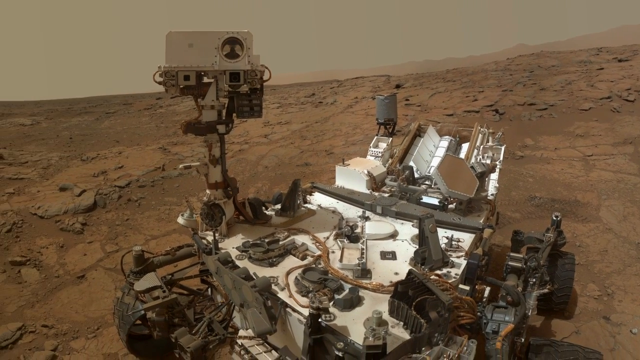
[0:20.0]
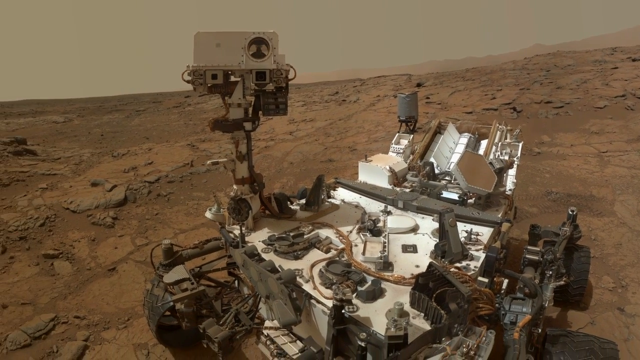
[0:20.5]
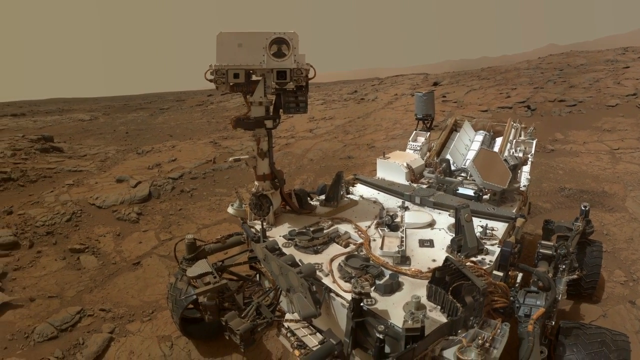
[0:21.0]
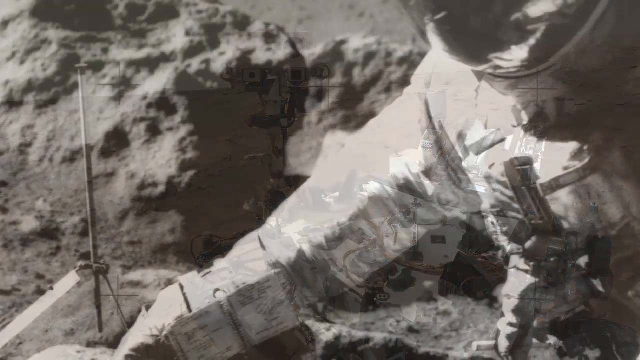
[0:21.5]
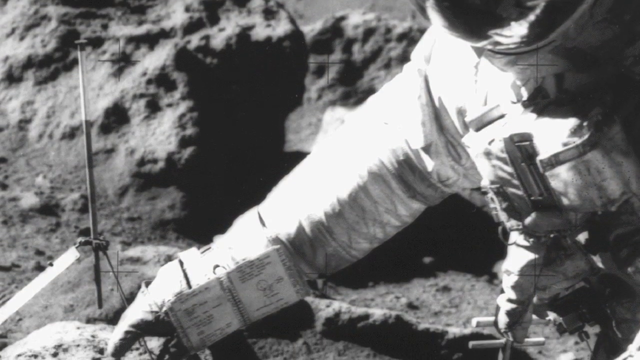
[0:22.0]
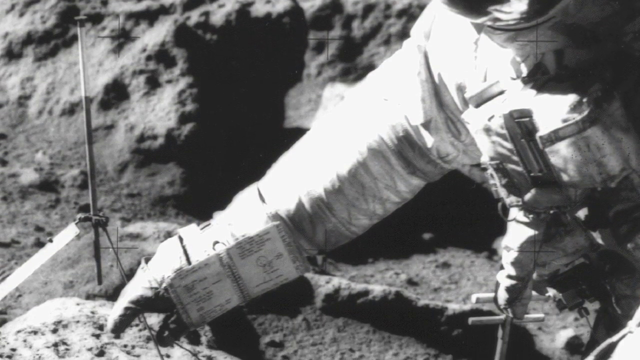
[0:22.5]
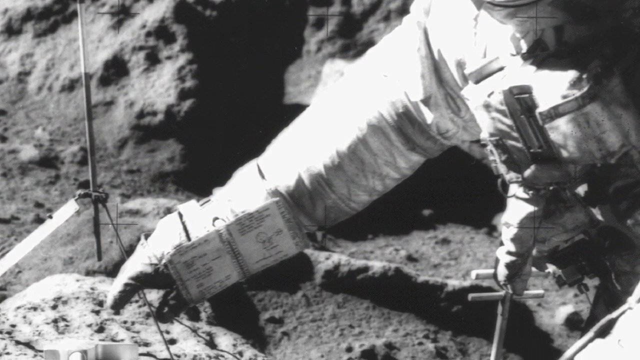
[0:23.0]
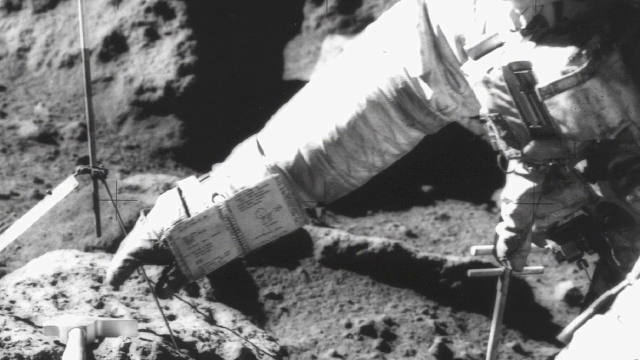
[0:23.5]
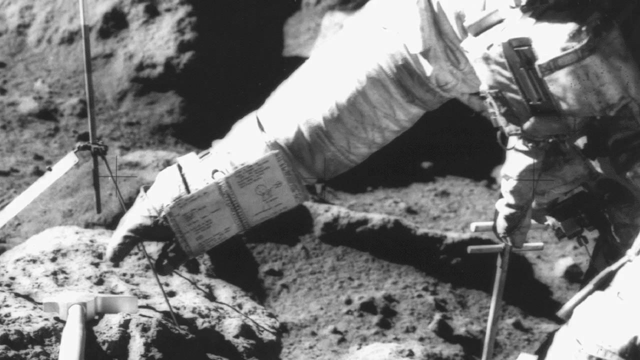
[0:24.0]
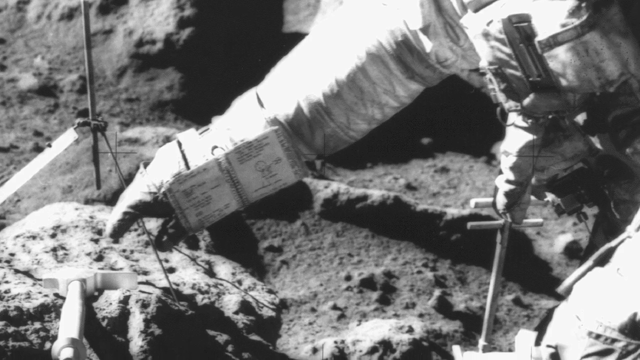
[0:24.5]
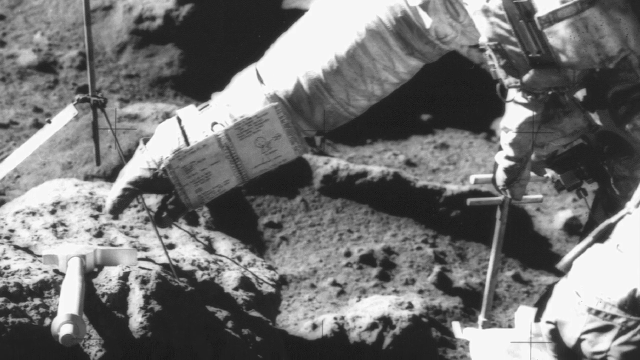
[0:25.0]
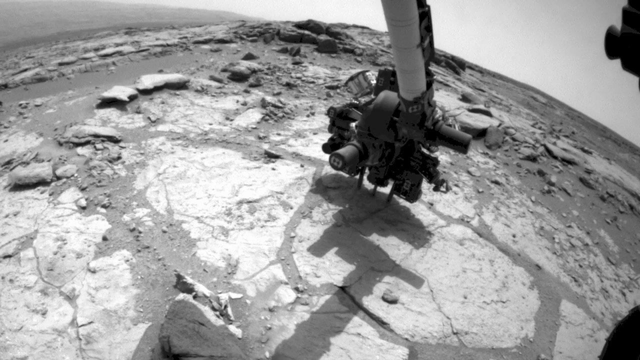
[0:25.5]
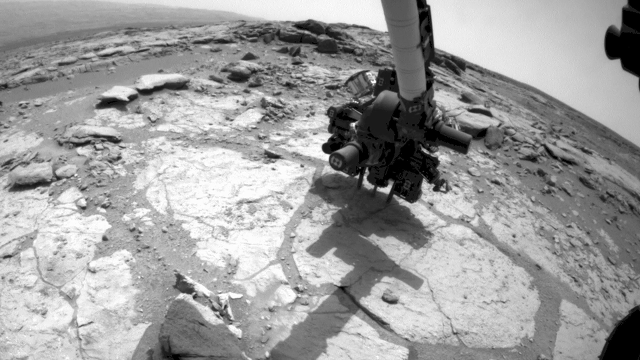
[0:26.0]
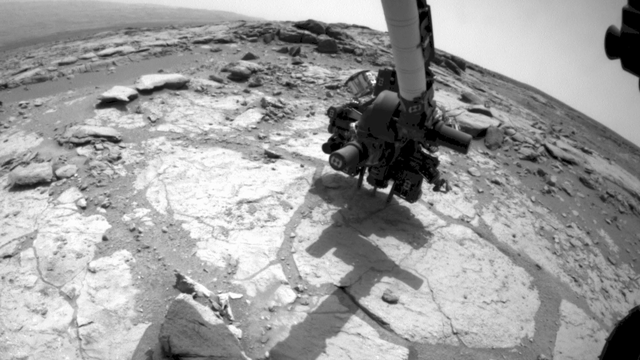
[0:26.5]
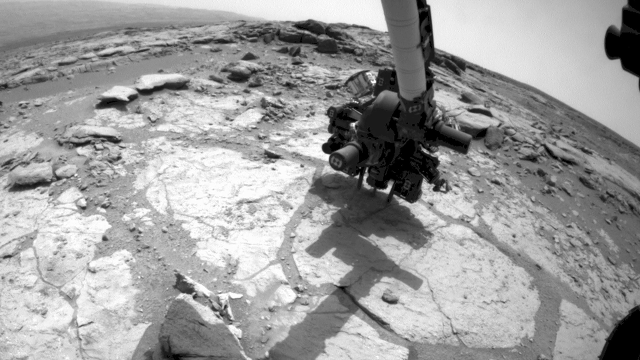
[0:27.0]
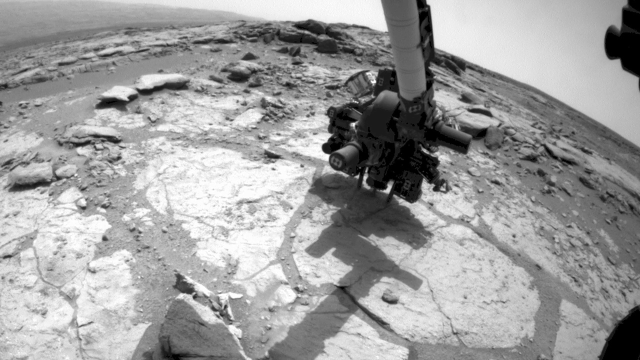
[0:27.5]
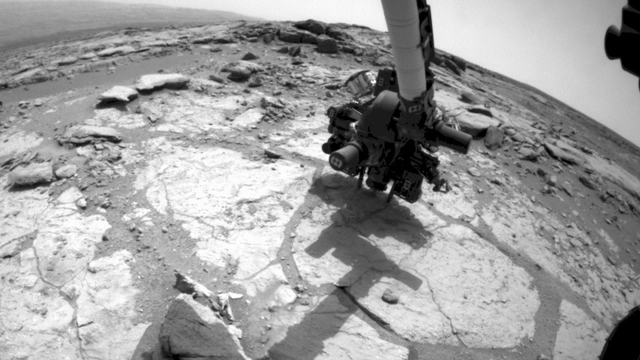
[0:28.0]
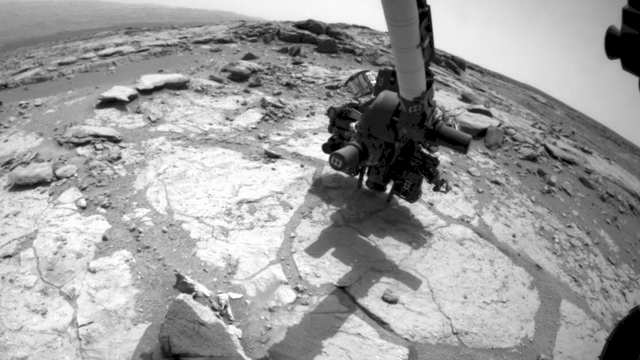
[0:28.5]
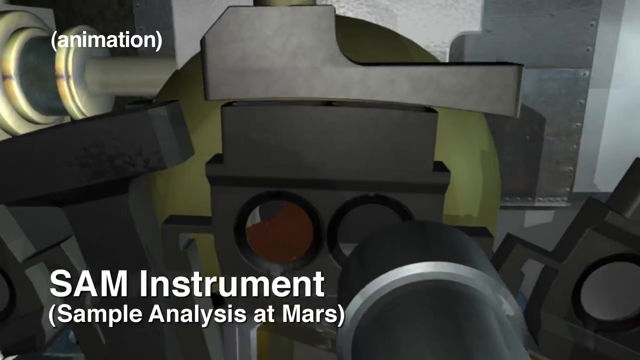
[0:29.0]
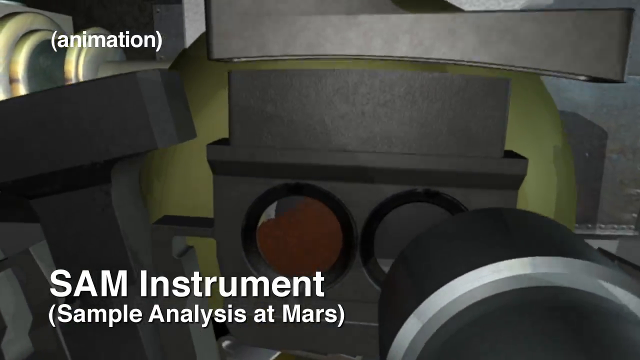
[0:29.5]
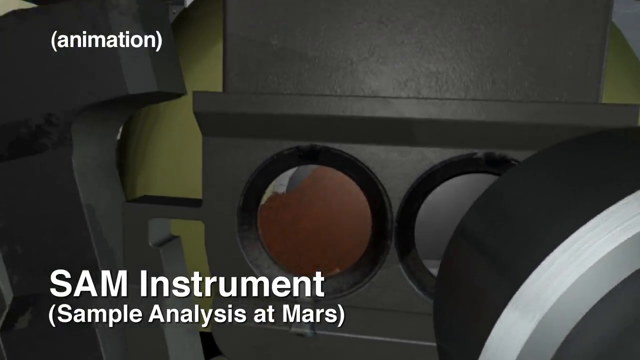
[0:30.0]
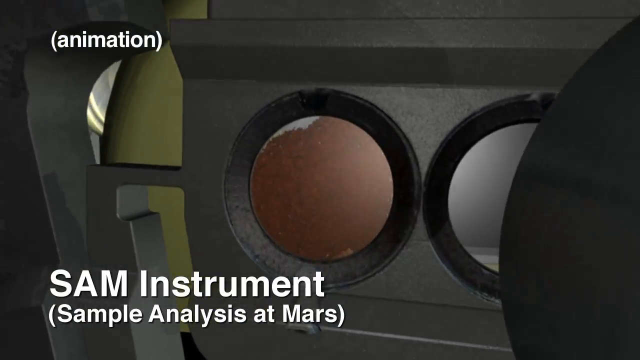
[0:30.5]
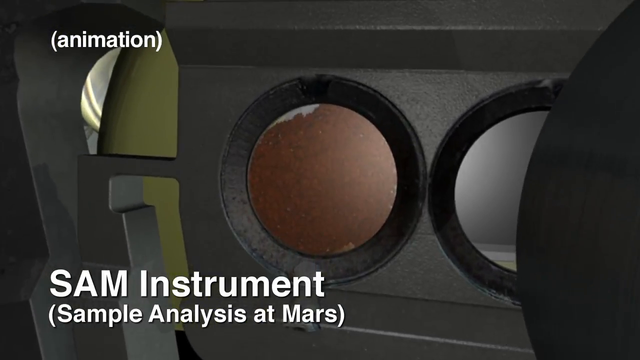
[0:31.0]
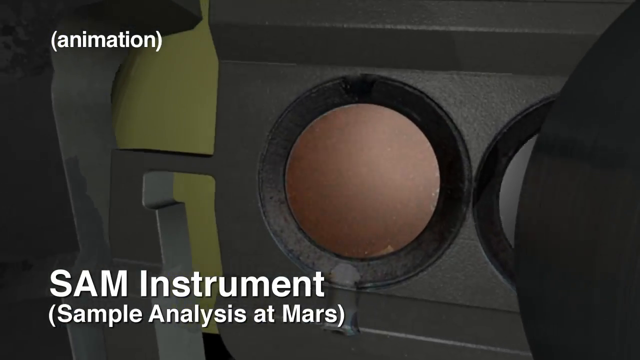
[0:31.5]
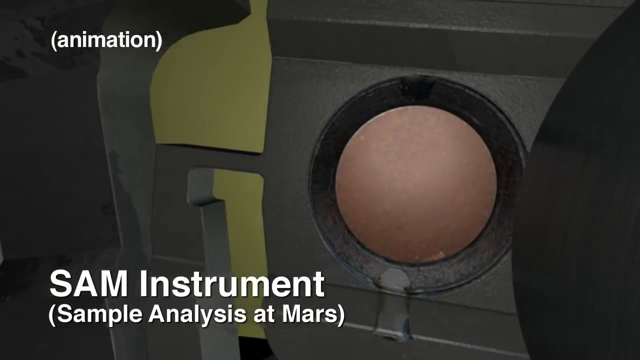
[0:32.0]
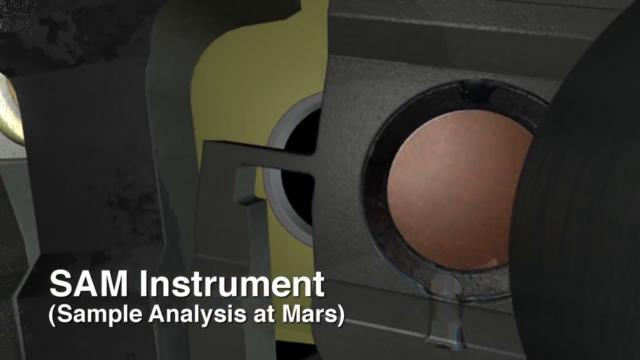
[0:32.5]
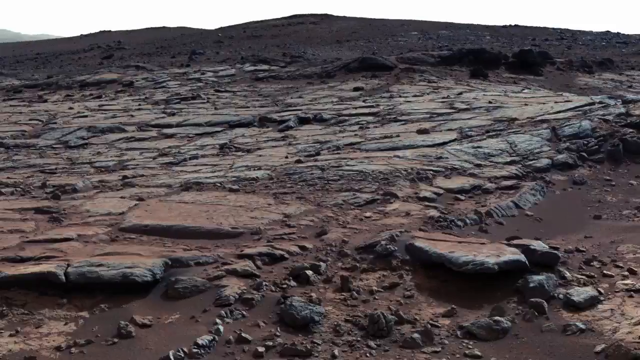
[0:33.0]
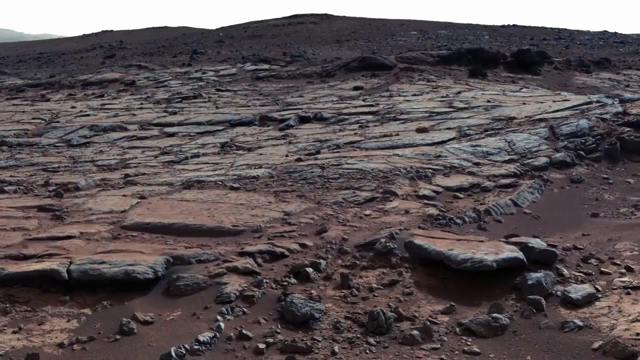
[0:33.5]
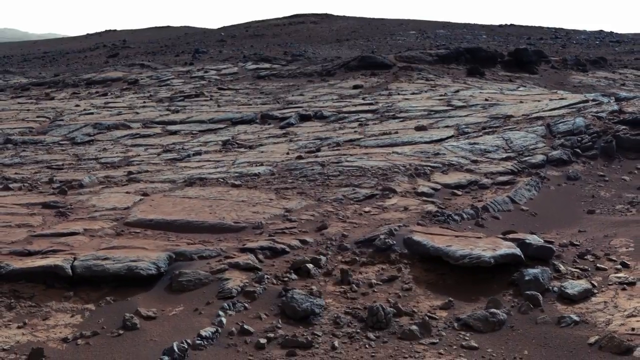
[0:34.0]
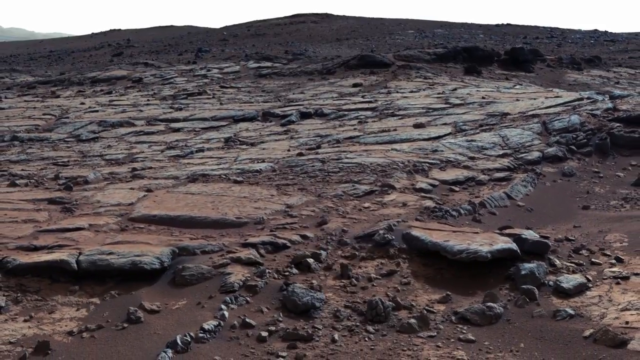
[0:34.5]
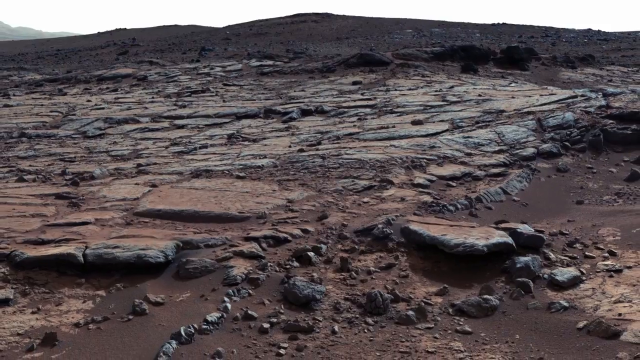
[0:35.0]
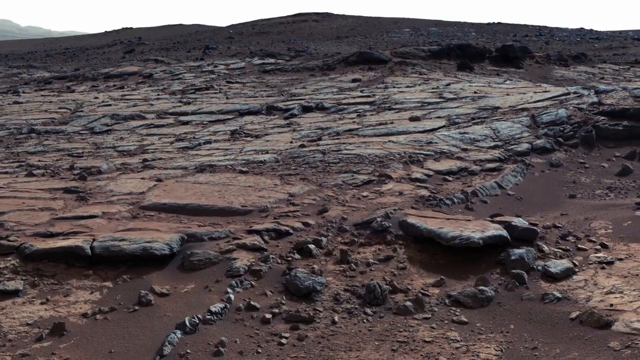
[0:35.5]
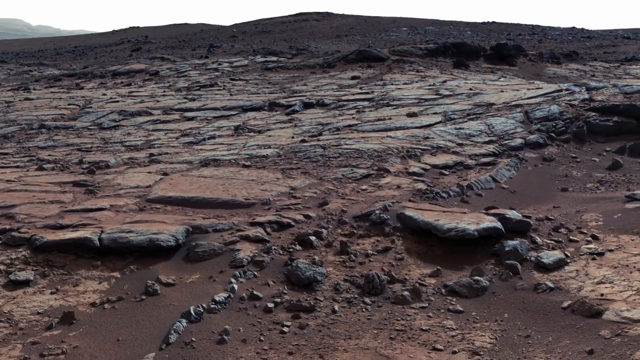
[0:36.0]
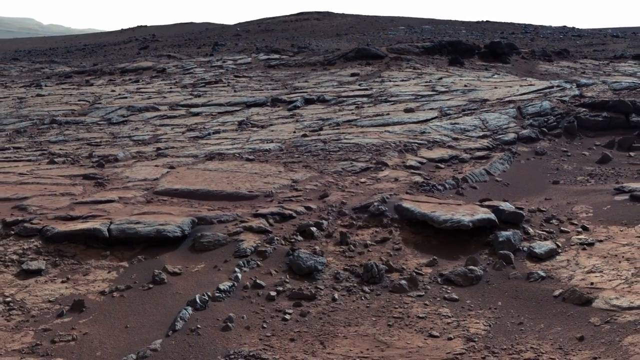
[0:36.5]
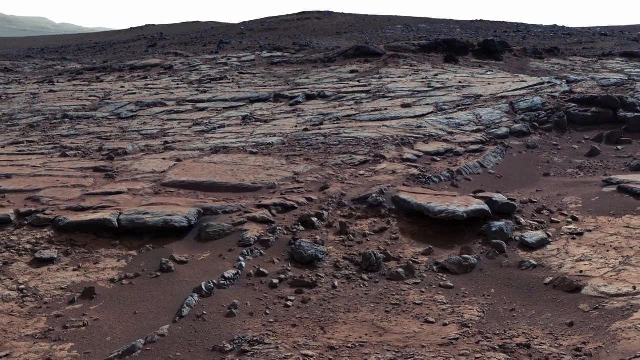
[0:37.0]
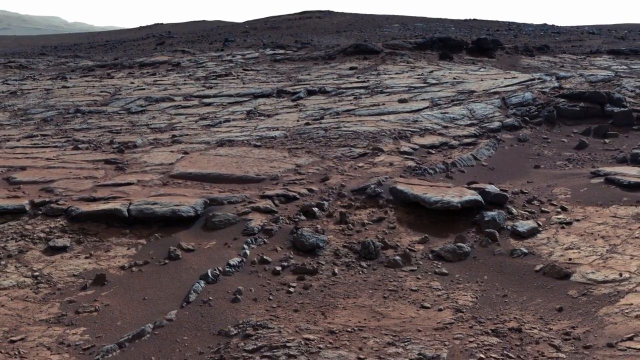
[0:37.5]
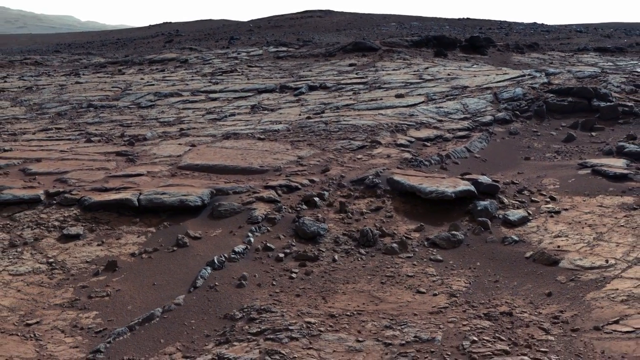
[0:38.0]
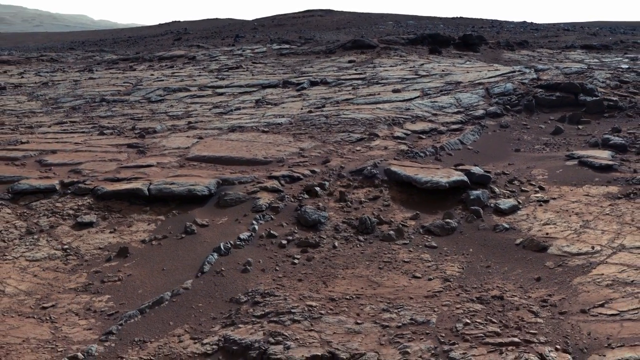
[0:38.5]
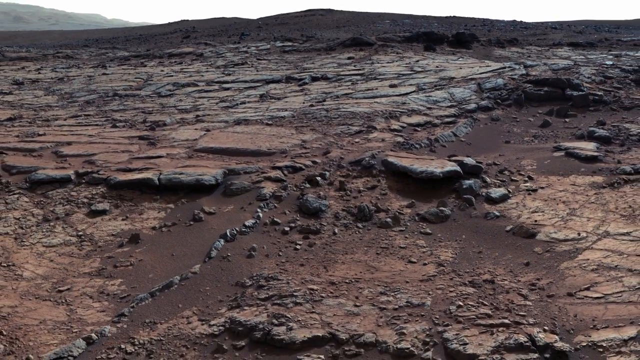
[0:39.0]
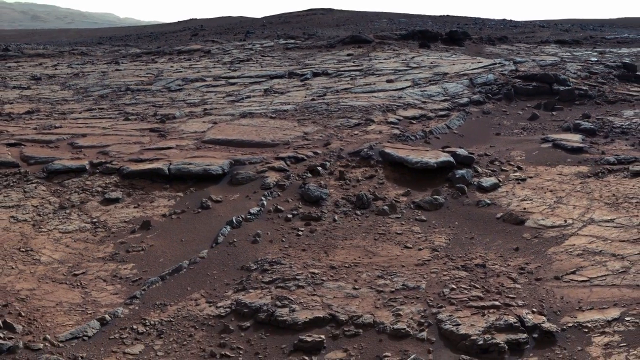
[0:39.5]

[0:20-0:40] An expansive view of Mars using the sample analysis instrument at Mars appears. It seems to give a wide view of the planet and of the equipment being used to explore it, and there seem to be many pictures showing a good portion of Mars and this machinery. One looks like a person on Mars trying to grasp or get something, apparently a person in a kind of space suit probing around the planet. The equipment looks expansive.